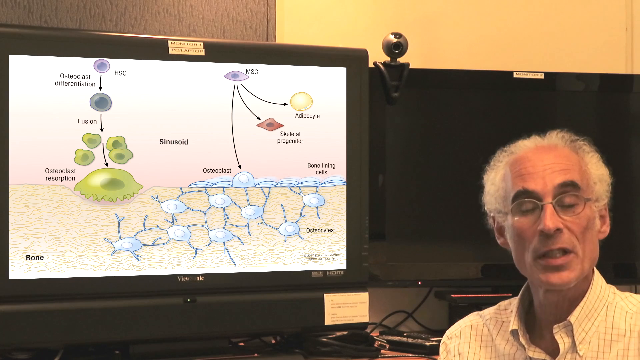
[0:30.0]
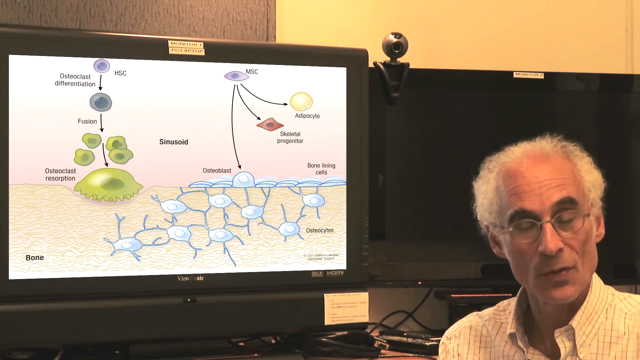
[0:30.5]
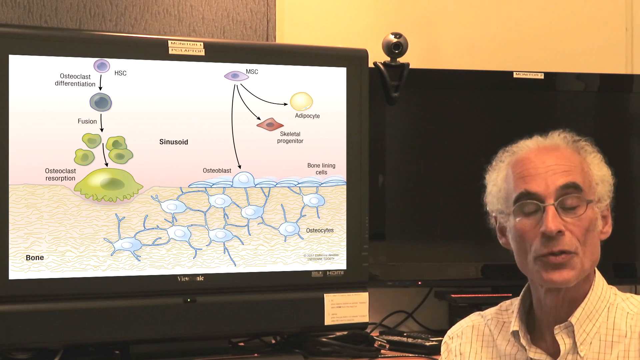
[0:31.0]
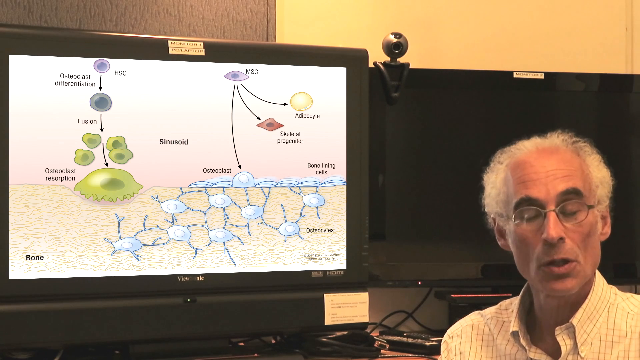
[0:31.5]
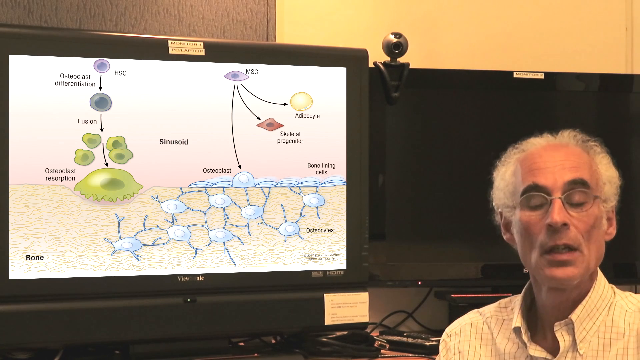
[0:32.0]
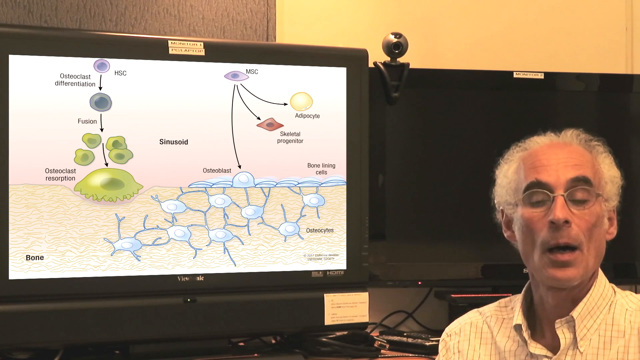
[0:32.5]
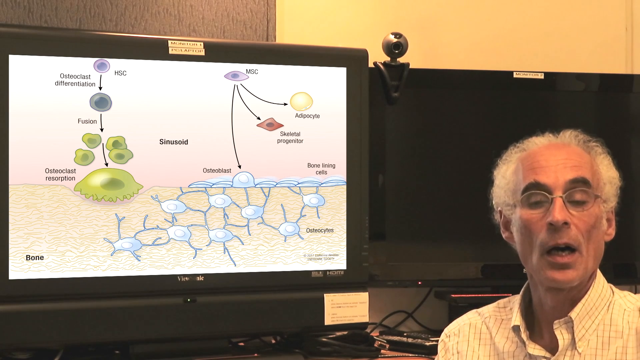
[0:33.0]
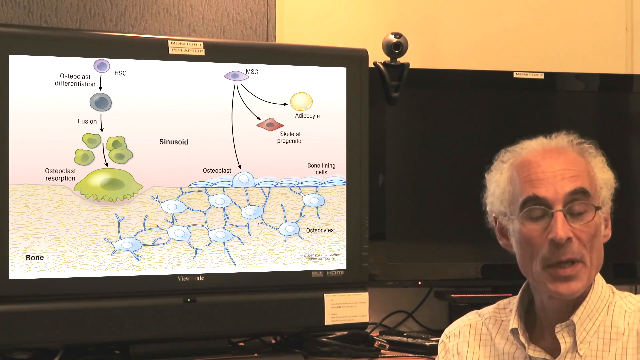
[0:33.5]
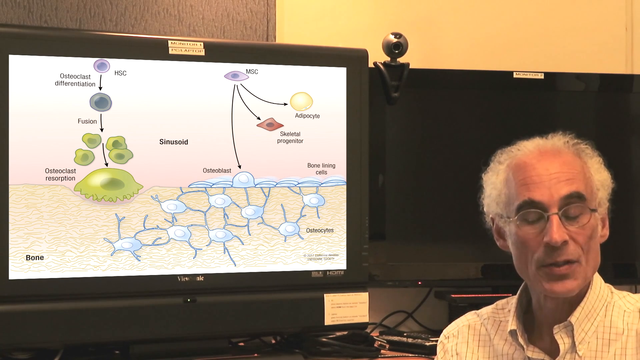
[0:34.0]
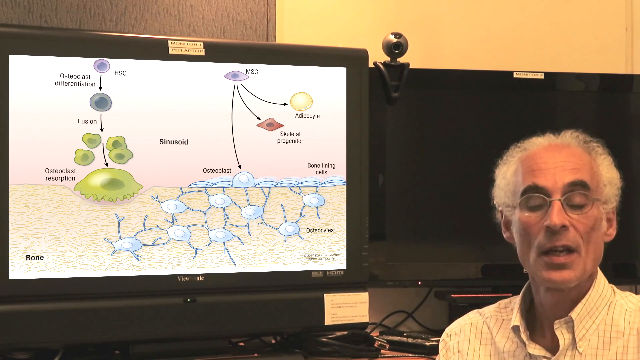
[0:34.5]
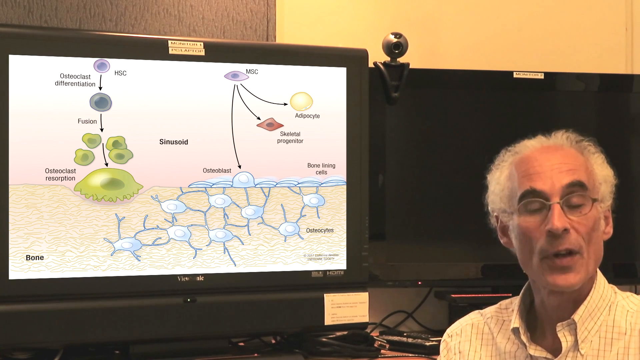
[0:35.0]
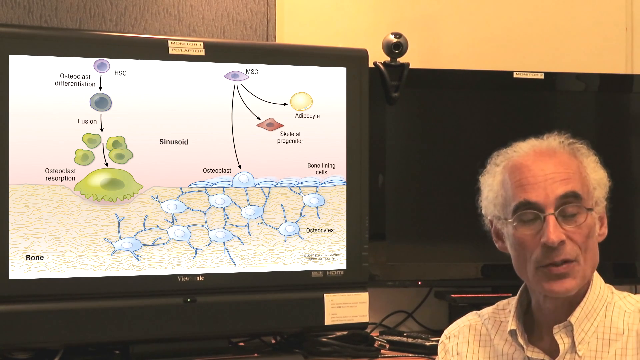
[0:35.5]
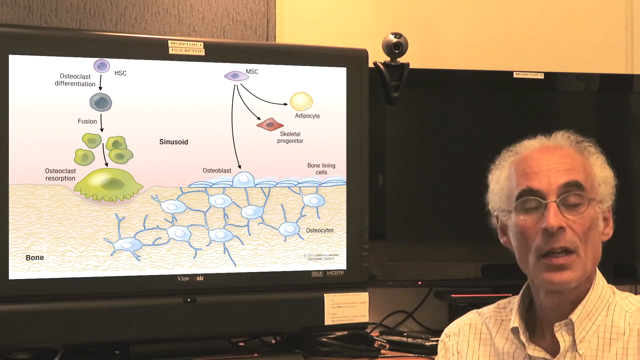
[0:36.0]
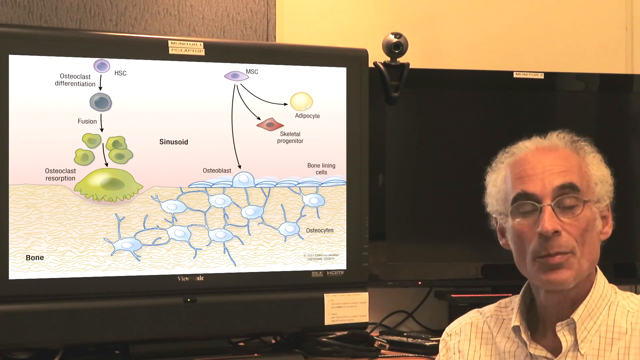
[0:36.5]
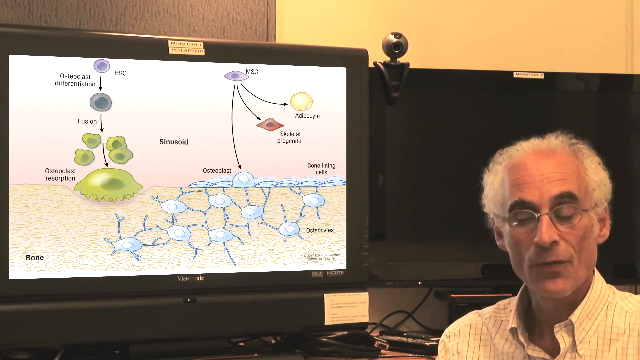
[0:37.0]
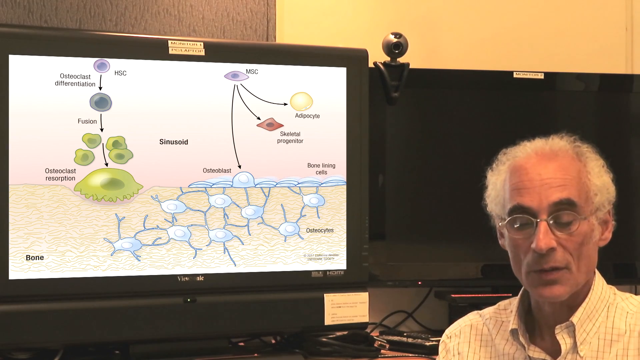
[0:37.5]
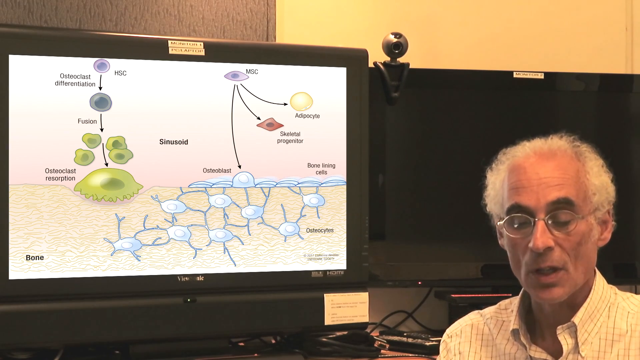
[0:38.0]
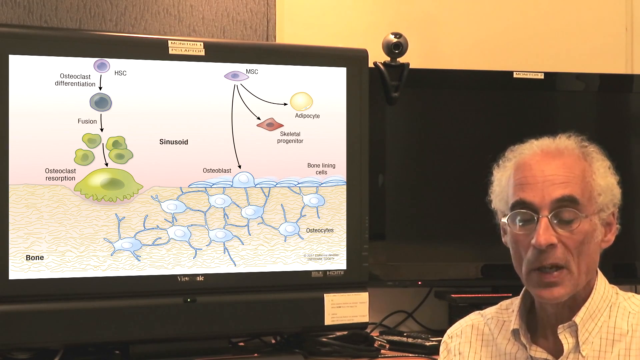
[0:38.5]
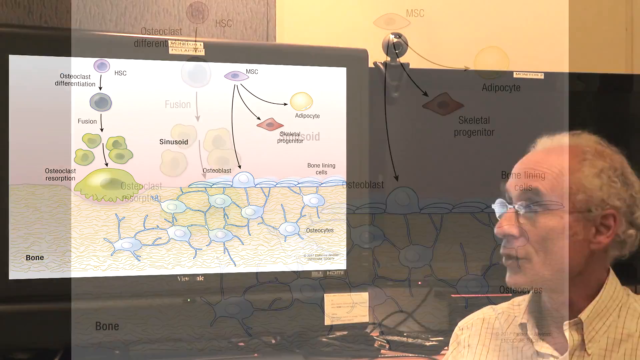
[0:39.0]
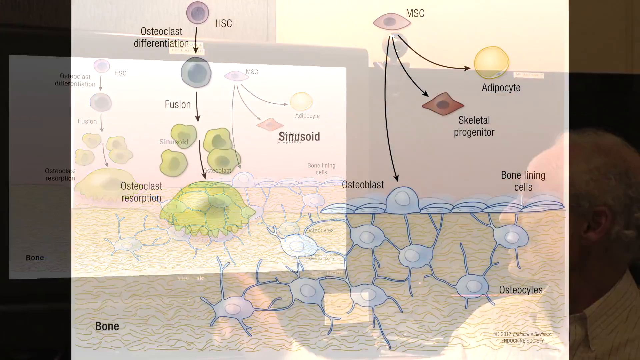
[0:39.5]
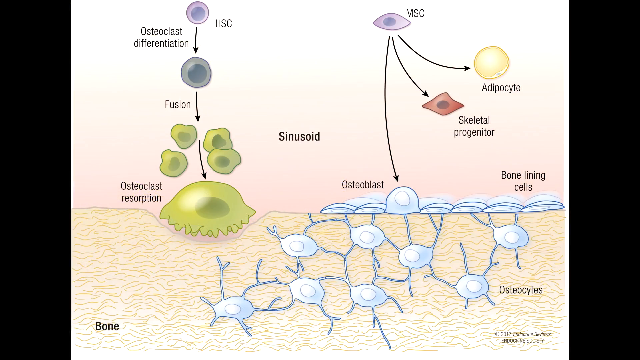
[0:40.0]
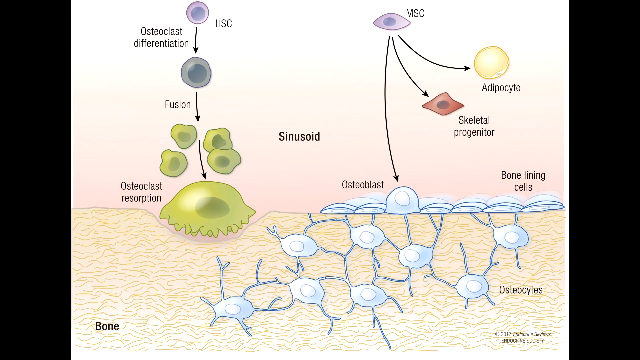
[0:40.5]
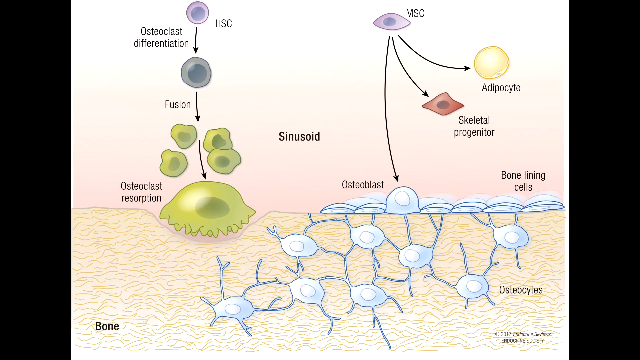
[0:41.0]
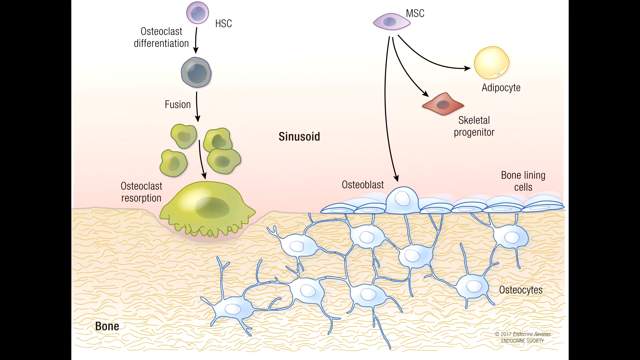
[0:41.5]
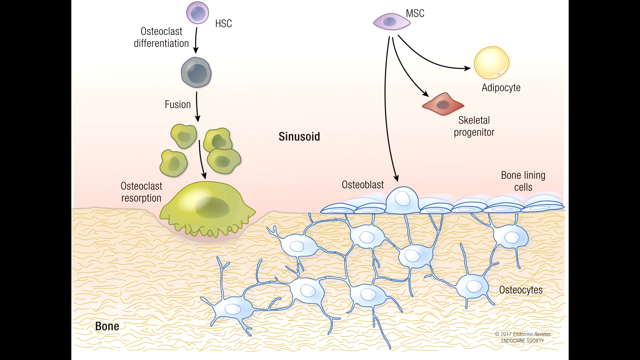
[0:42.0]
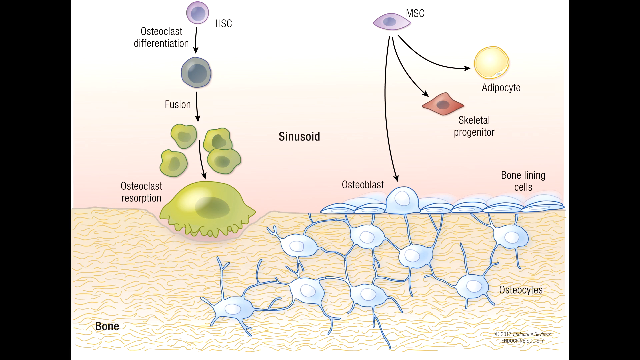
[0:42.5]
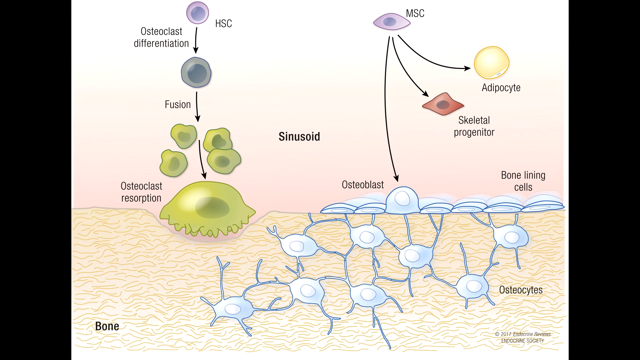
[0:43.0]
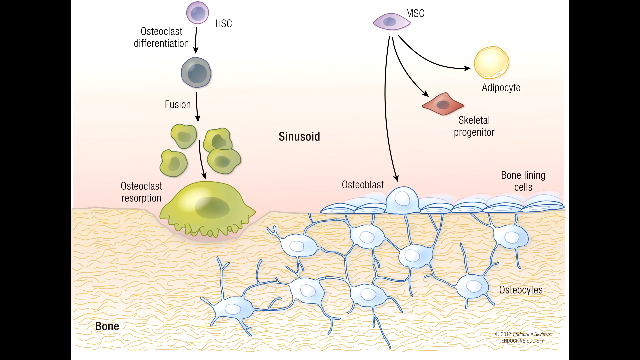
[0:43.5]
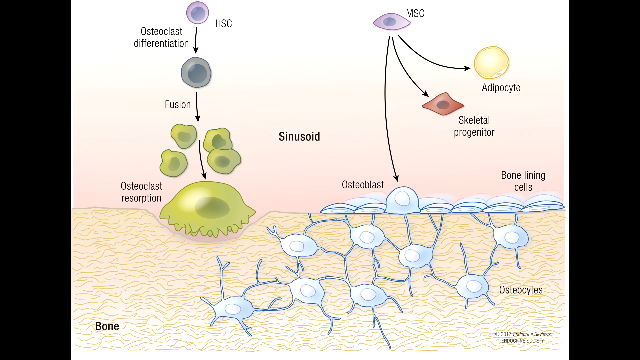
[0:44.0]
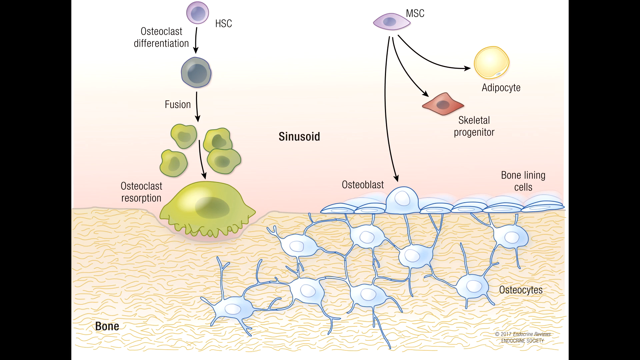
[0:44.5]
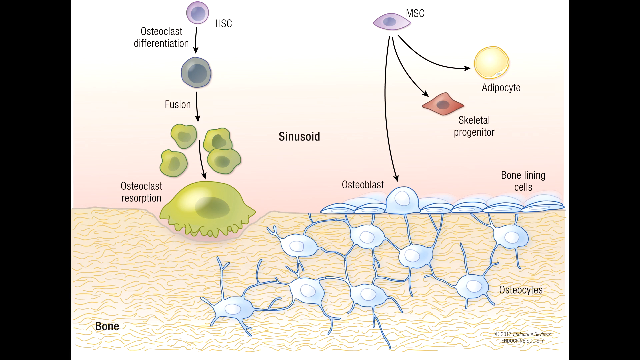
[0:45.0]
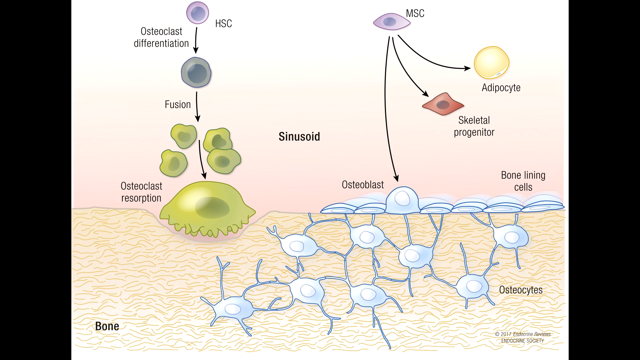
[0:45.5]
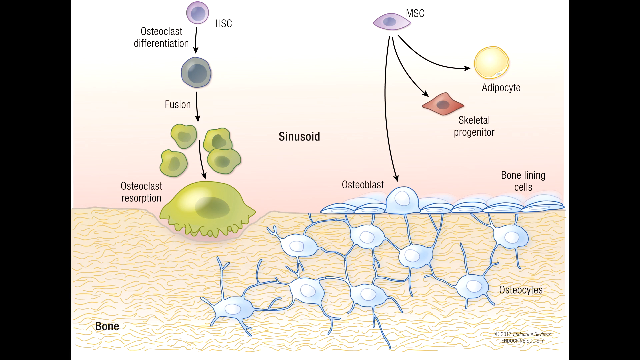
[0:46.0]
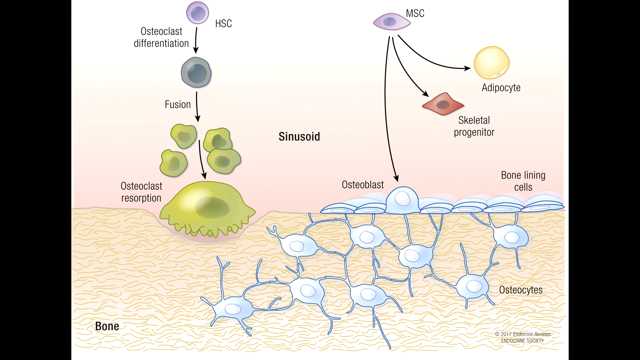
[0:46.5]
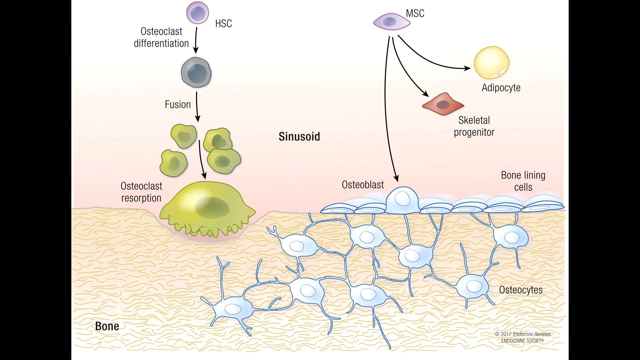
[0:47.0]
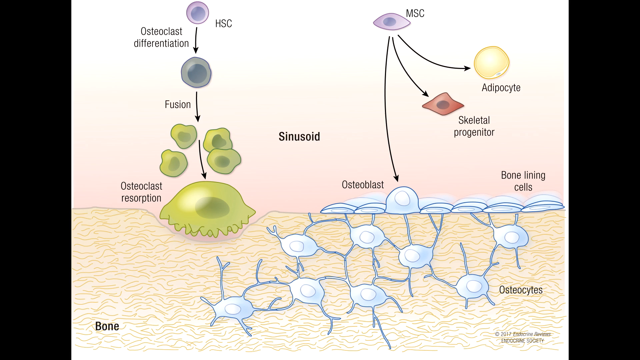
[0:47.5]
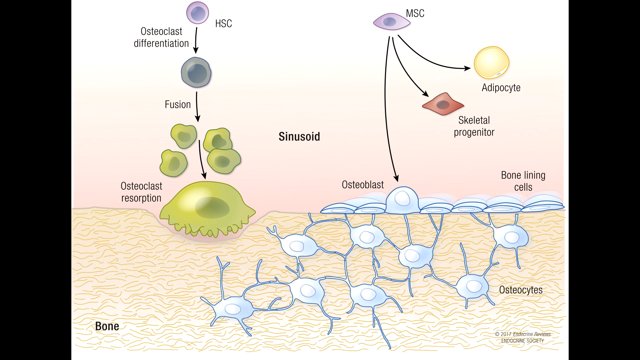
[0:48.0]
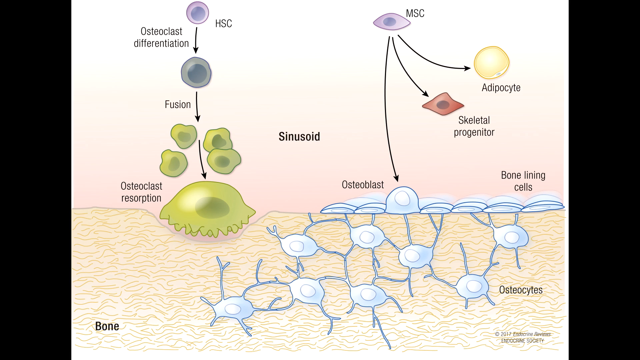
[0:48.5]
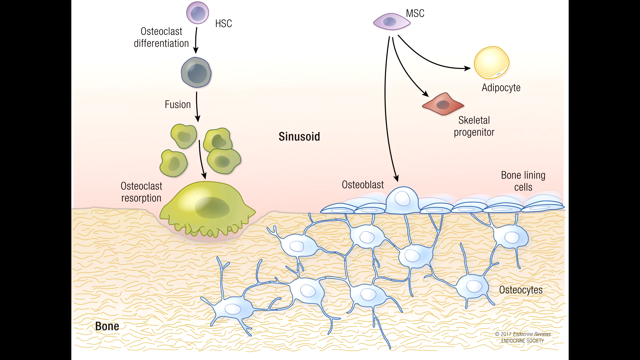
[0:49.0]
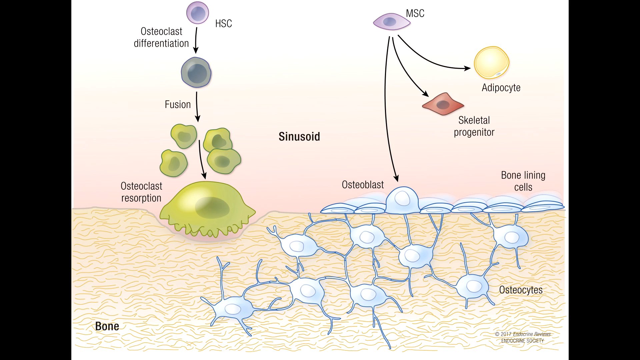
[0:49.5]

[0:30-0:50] A man, perhaps in his late sixties, who looks like he may be an educator, professor or doctor, is sitting in the lower right corner while the focus is on the screen to the left, a black computer monitor. Behind the monitor is a wood cabinet, and to the right is a yellow wall. The screen apparently shows a cell process leading into the human bone, which appears at the bottom of the screen, covering items such as sinusoid and what looks like osteoclast differentiation turning into osteoclast resorption, laid out as a flow chart with arrows pointing downward. As he speaks, the man nods his head up and down, and his eyes seem to close. He slowly turns his head to the left, and his right arm comes up and points toward the monitor screen.